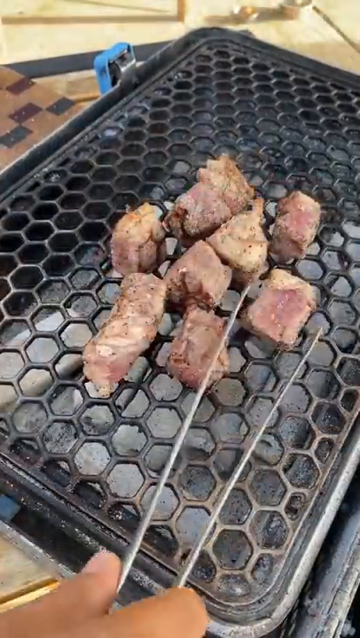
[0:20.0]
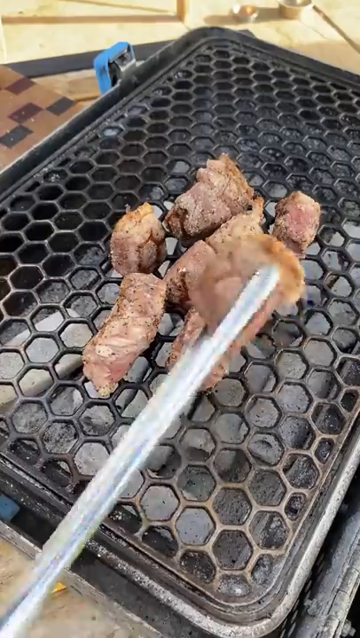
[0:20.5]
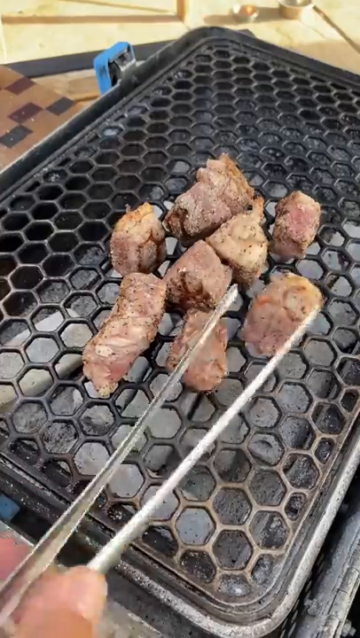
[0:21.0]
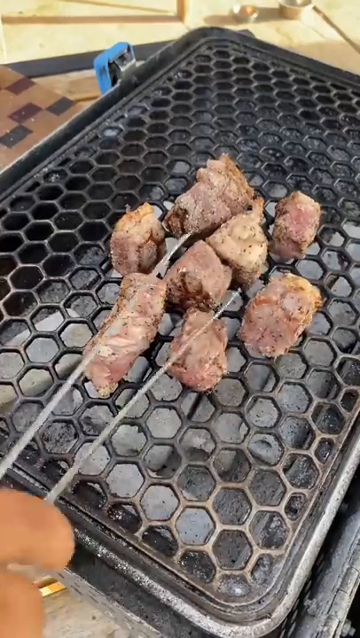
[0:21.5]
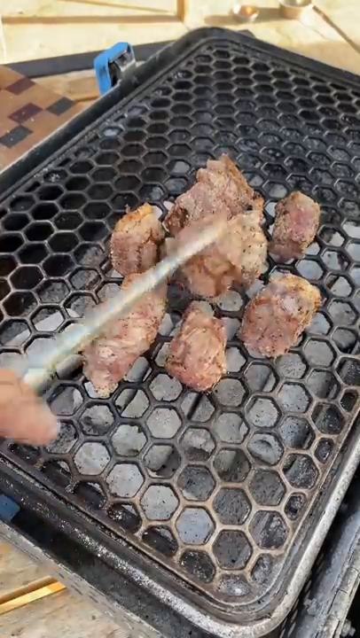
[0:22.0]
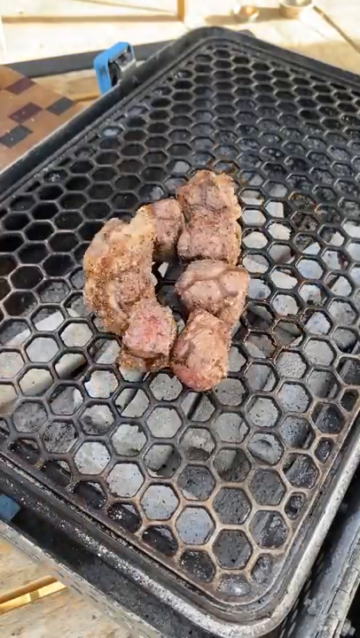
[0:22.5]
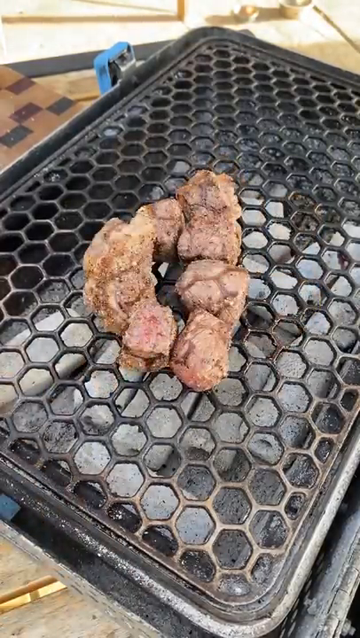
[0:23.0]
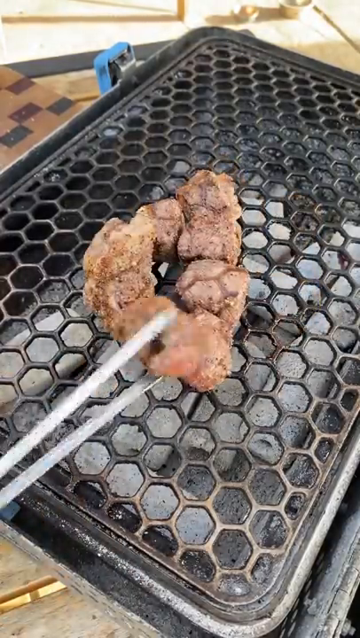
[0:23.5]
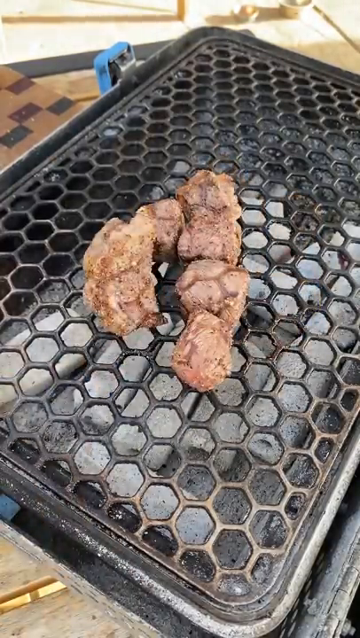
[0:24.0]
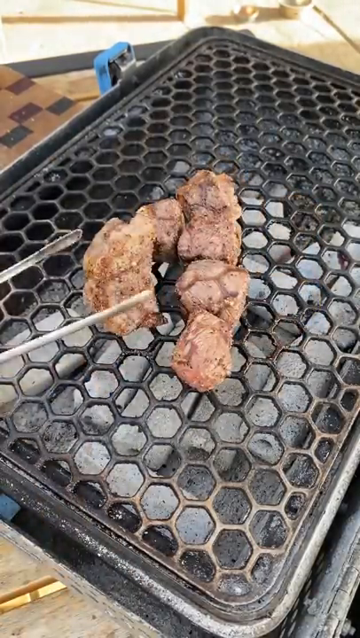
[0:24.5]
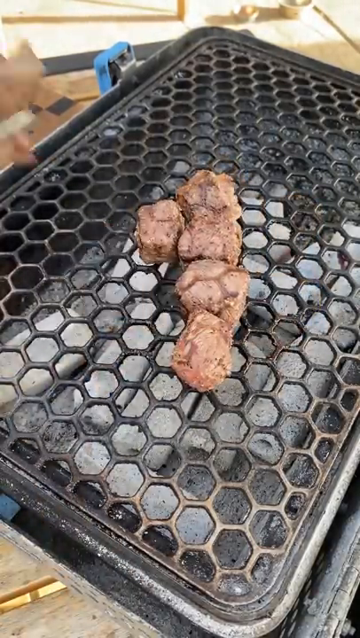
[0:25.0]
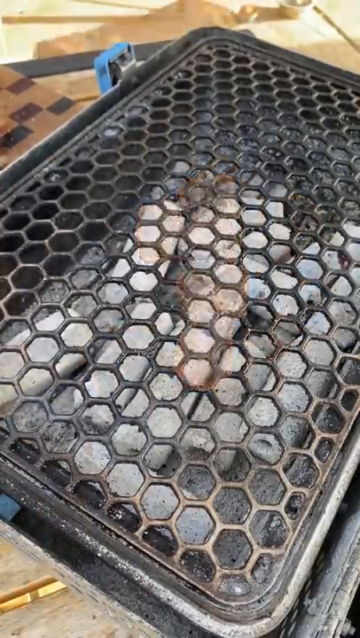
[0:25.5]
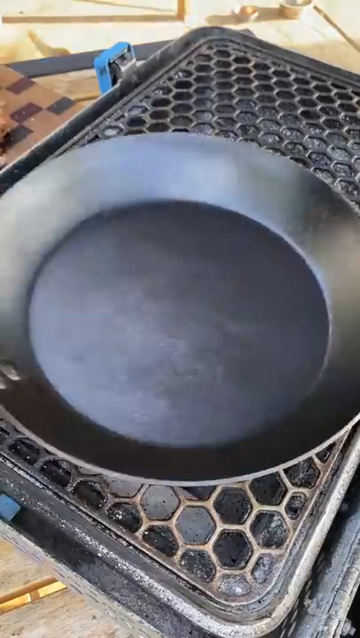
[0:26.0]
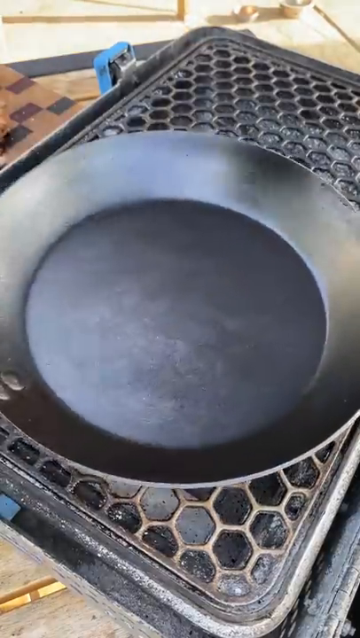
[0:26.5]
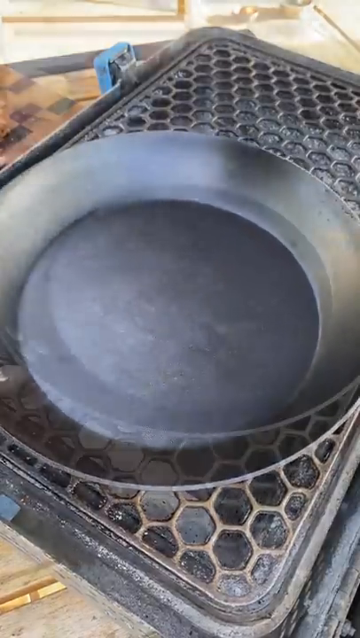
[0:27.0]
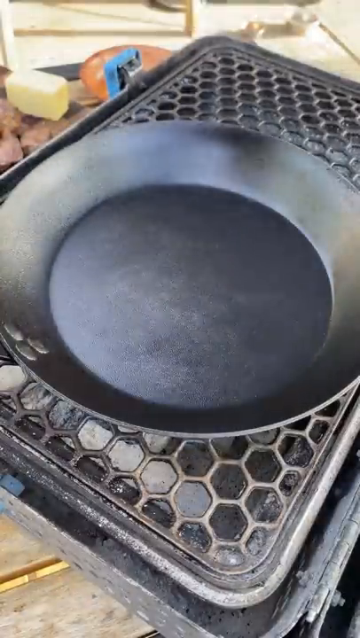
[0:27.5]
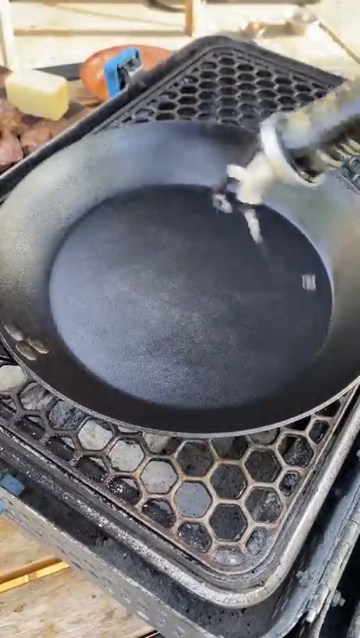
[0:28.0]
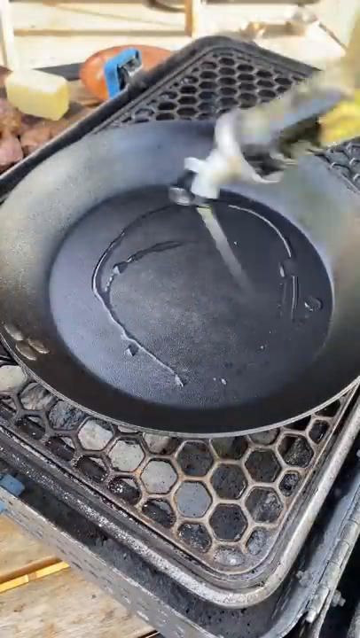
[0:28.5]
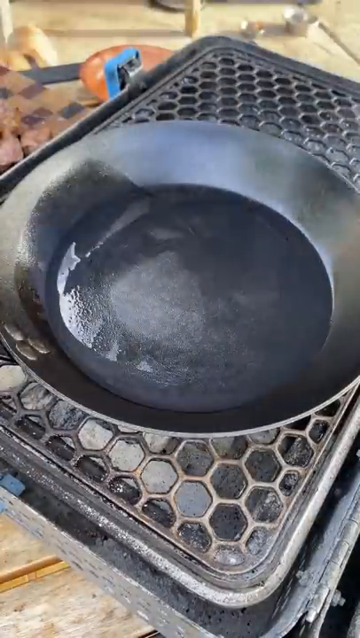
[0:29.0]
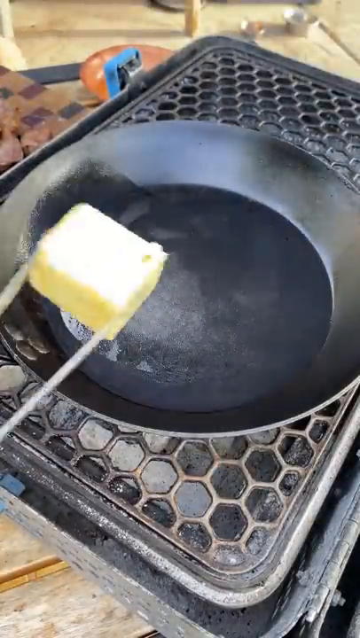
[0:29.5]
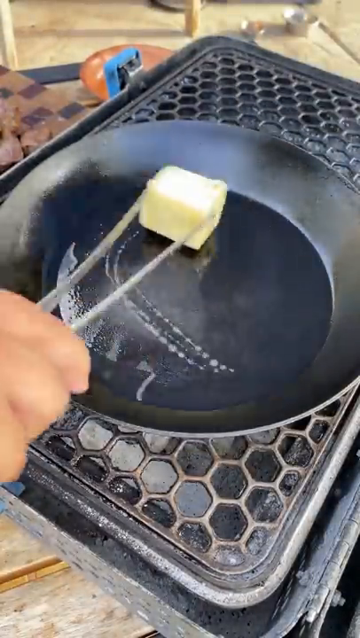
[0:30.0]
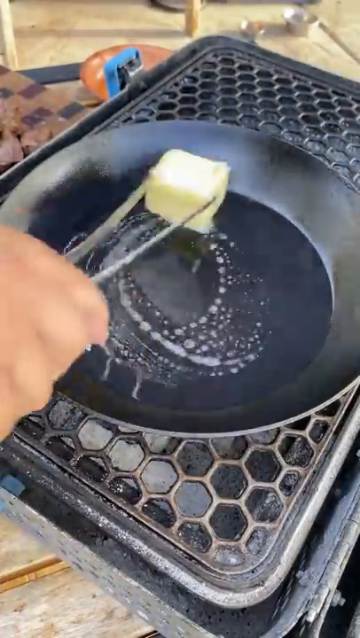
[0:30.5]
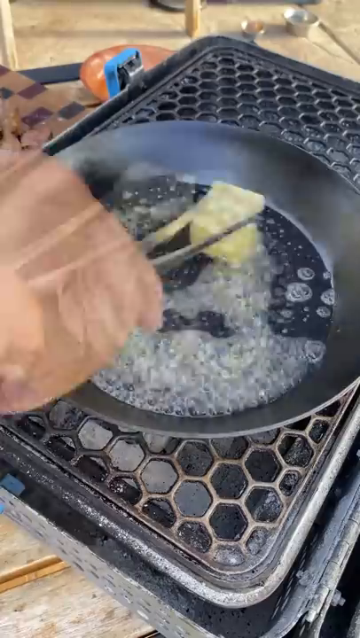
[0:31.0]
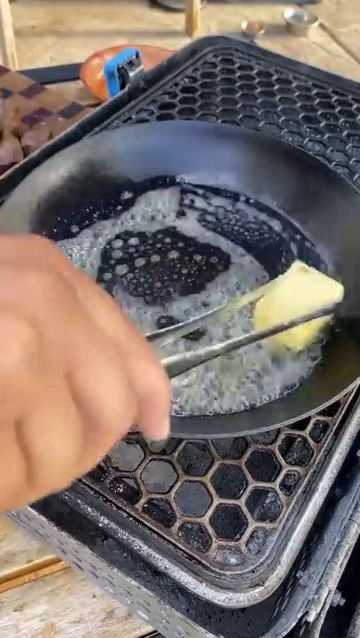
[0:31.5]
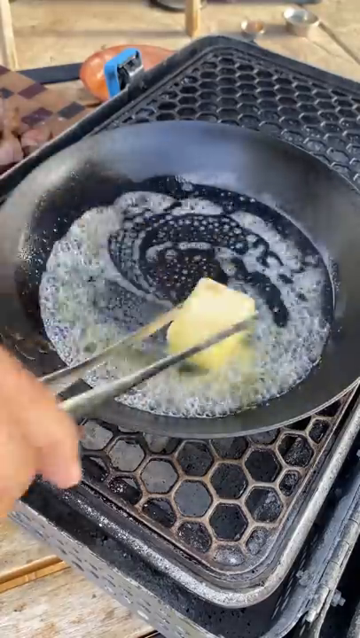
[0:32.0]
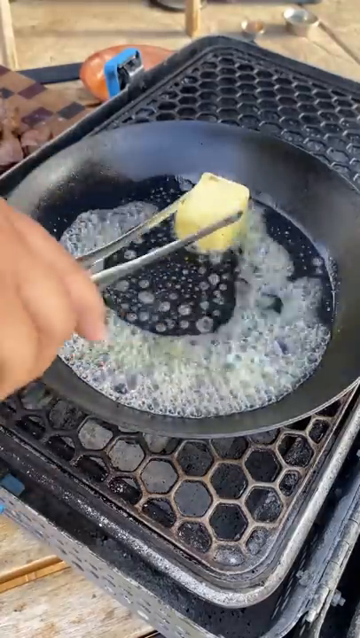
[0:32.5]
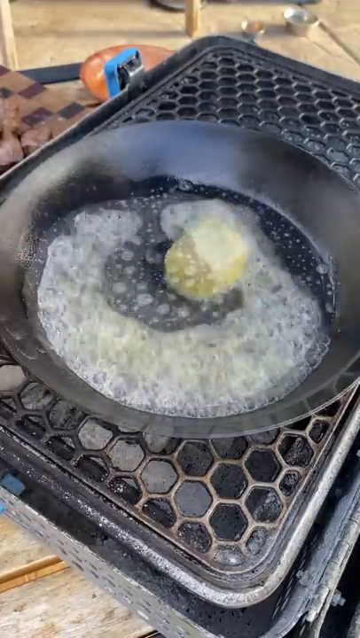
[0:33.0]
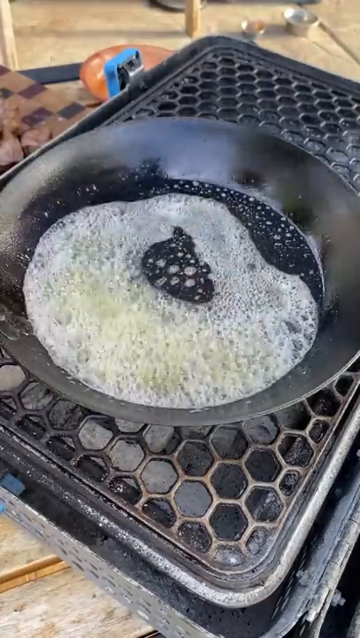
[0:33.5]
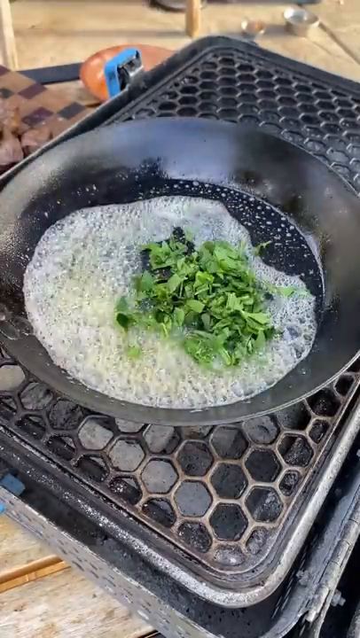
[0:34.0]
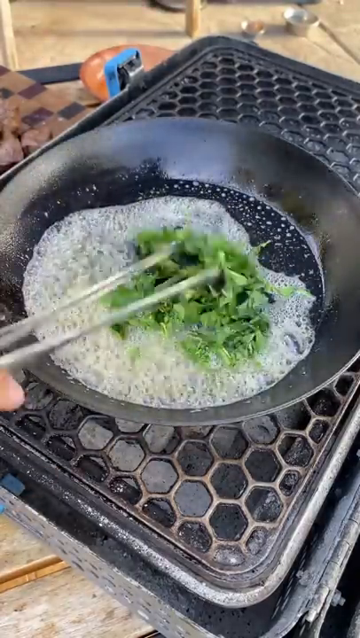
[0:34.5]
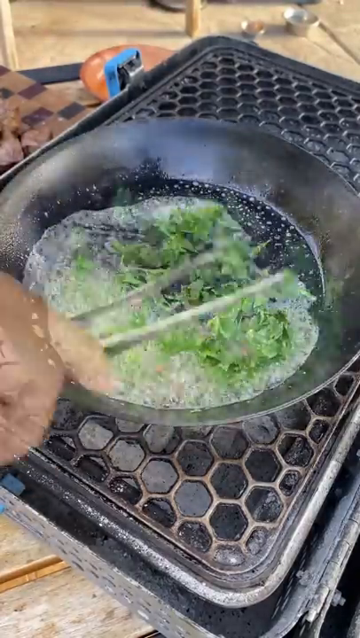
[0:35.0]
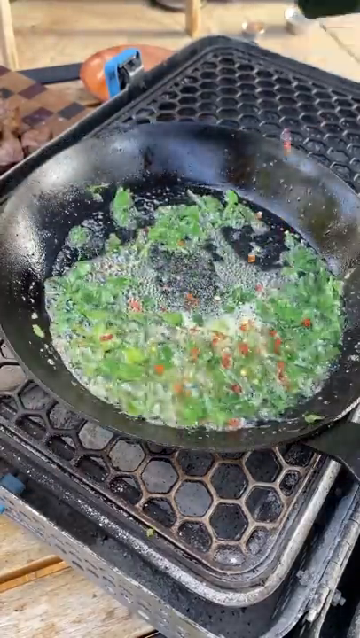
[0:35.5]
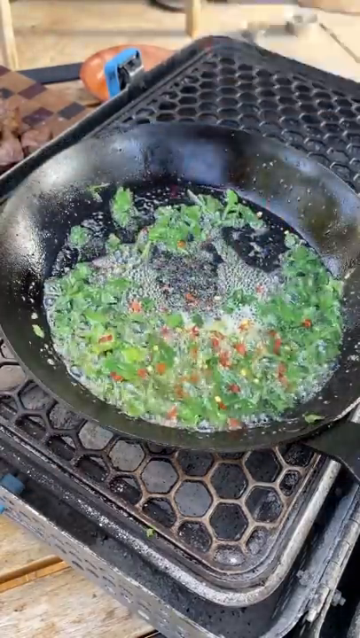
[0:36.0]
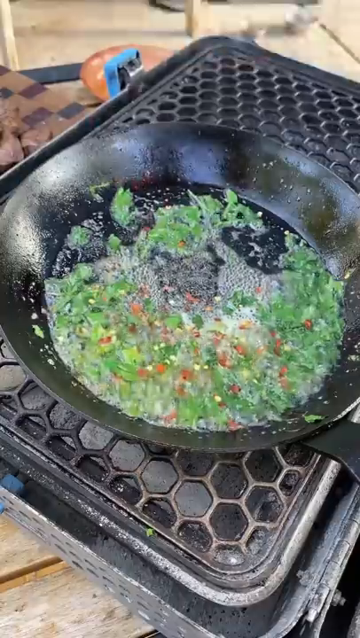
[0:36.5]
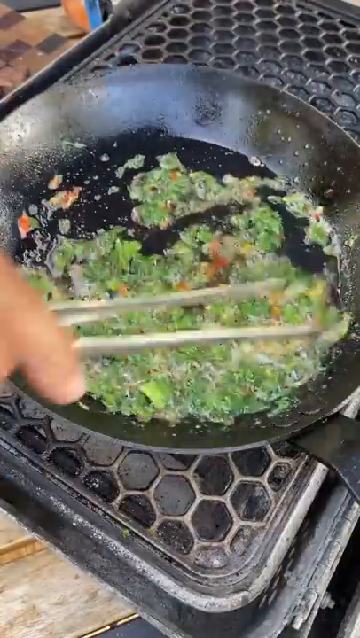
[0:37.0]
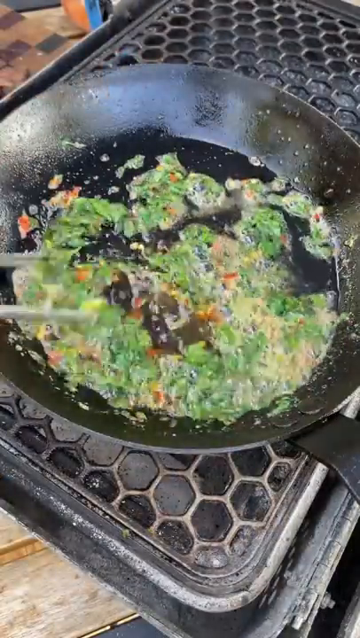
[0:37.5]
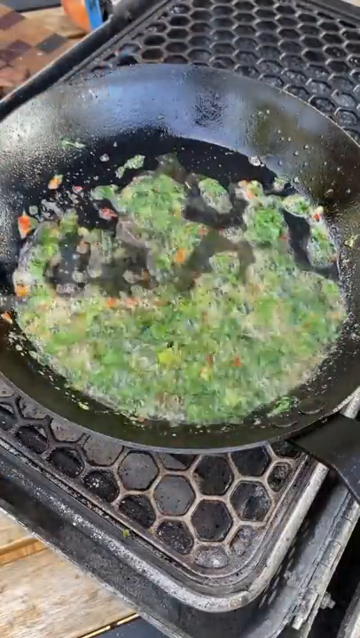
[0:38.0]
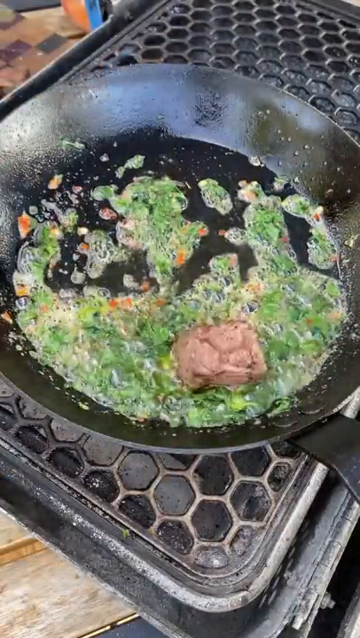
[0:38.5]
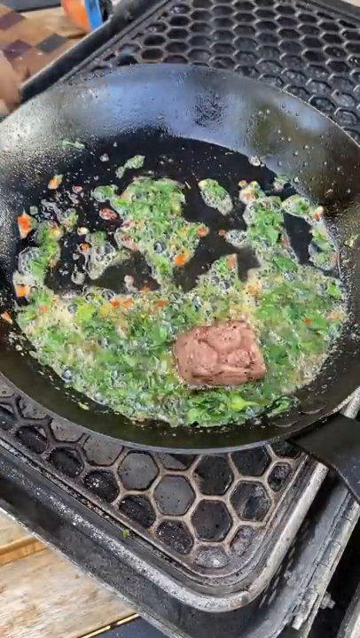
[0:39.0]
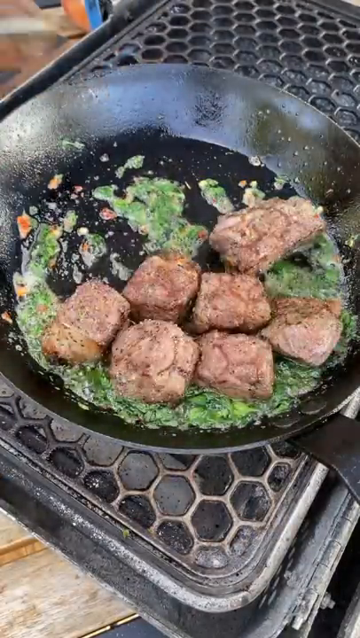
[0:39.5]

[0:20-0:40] The video apparently has 8.5 million views. The man flips all the steak pieces; there are 8 pieces, 2 of which are a little longer and skinnier. He takes them off the grill and puts a pan on the grill, adds some oil and a big chunk of butter, then what may be fresh parsley or cilantro and dried pepper flakes as seasoning. Once the oil is golden brown and seasoned, he puts the steak in.